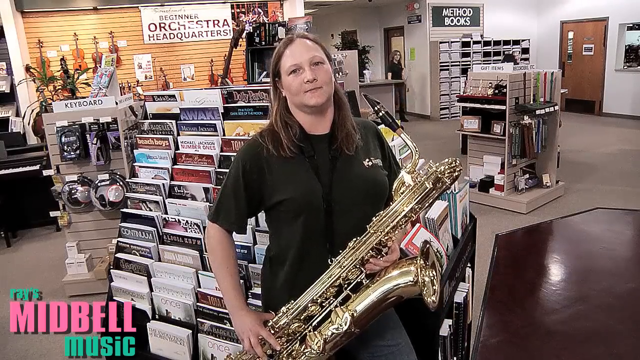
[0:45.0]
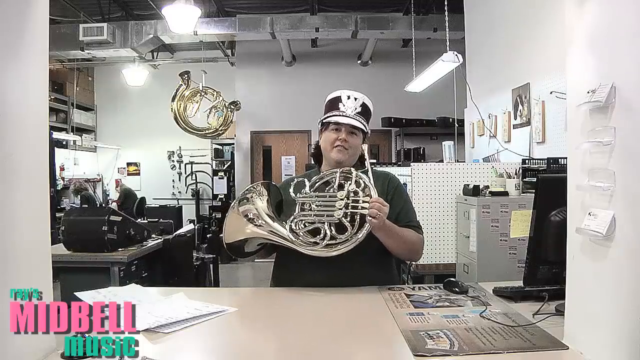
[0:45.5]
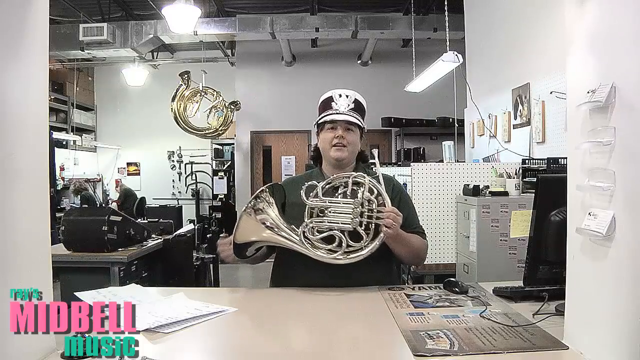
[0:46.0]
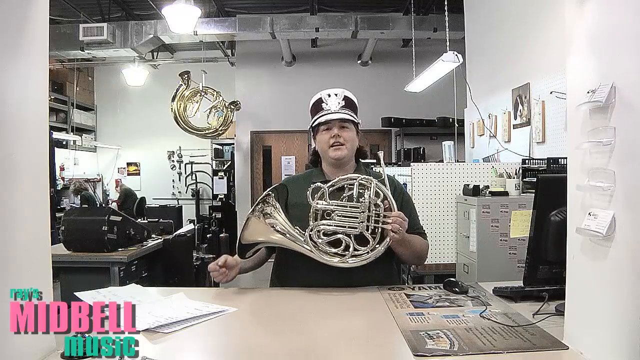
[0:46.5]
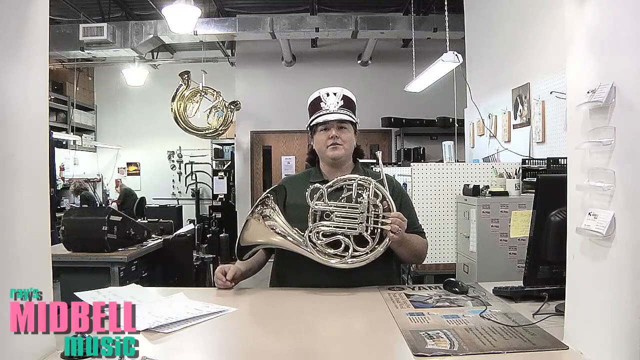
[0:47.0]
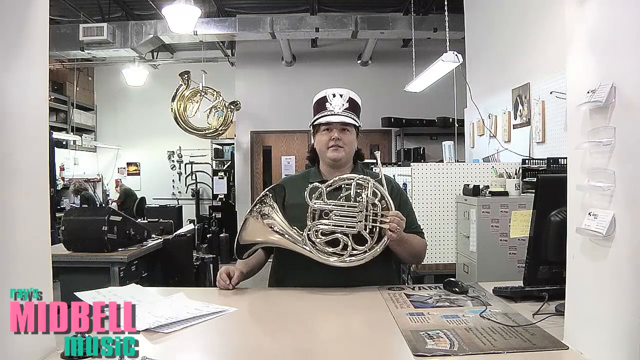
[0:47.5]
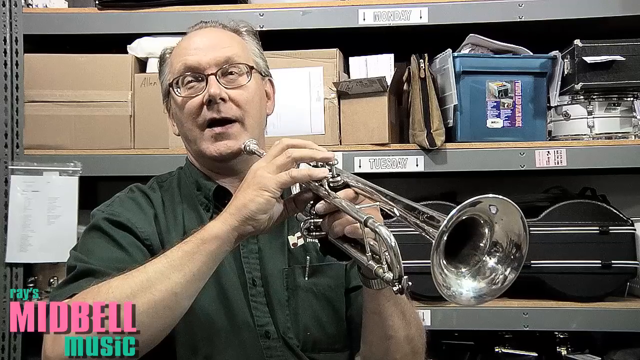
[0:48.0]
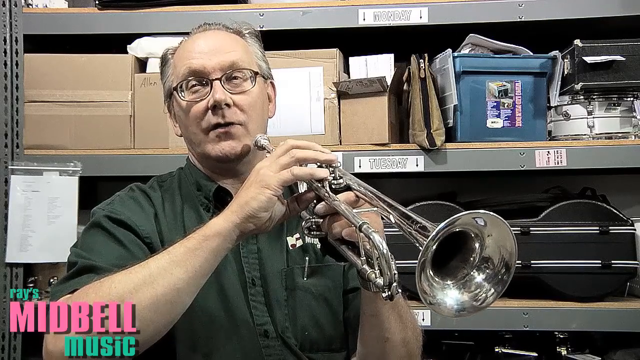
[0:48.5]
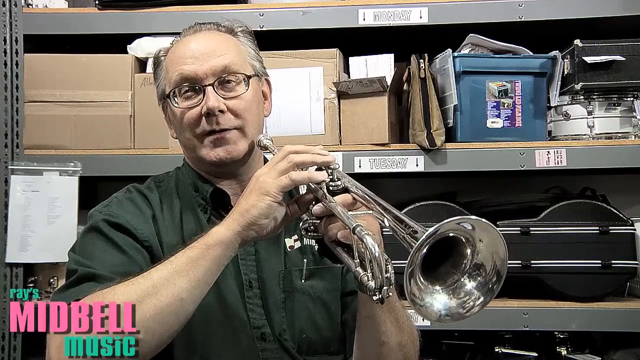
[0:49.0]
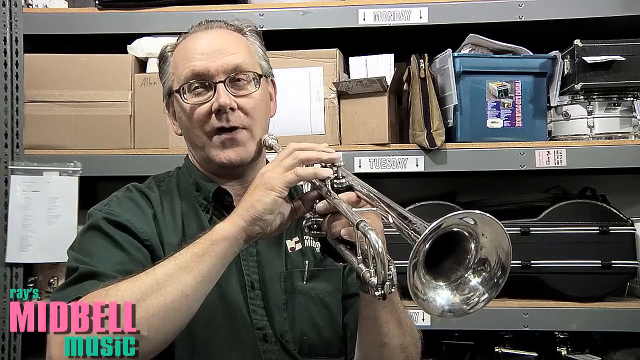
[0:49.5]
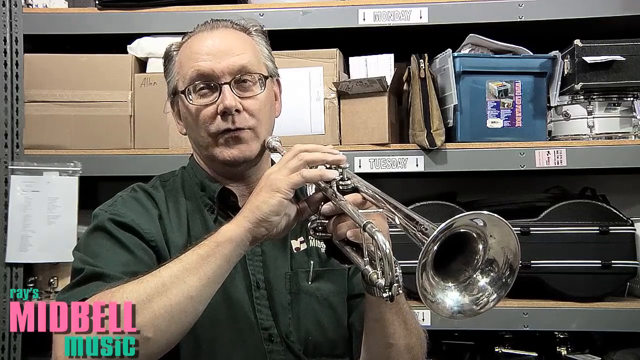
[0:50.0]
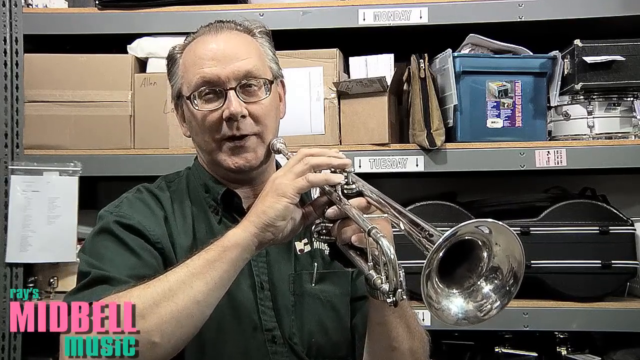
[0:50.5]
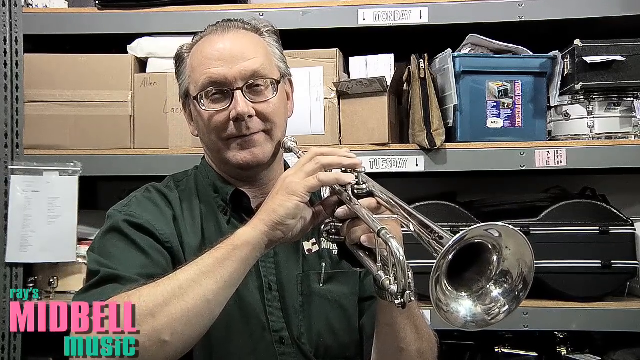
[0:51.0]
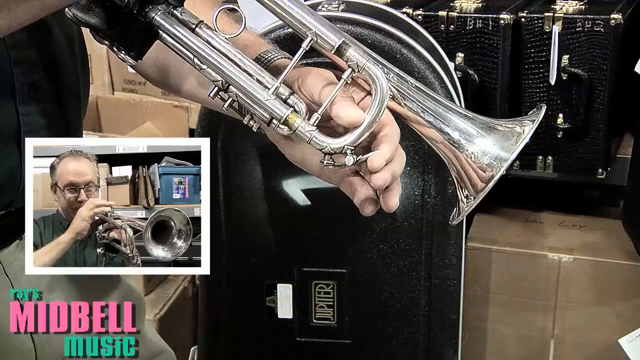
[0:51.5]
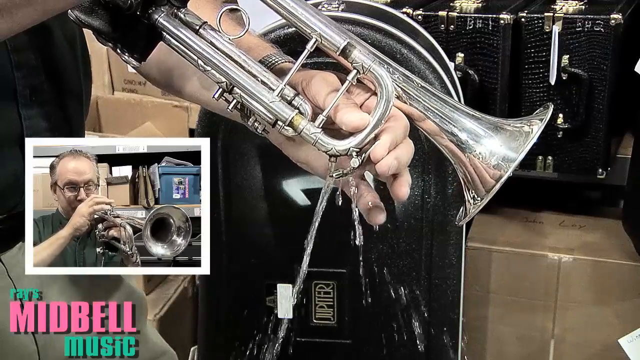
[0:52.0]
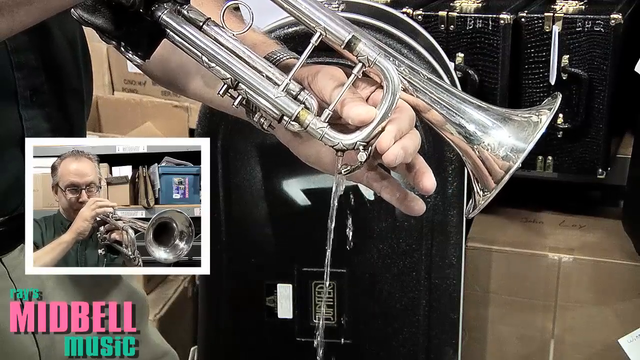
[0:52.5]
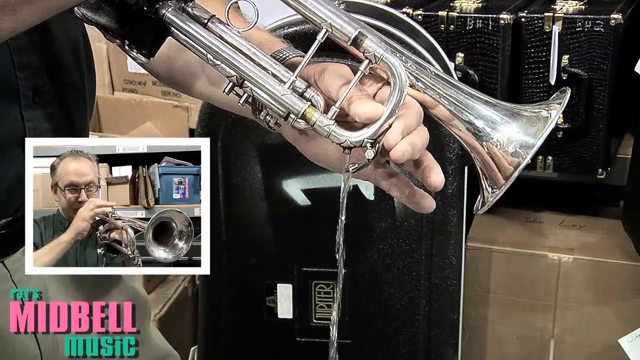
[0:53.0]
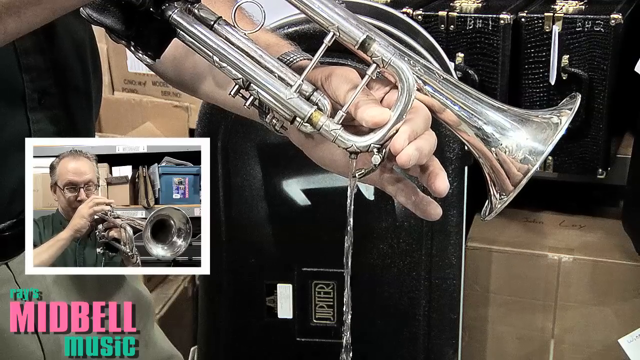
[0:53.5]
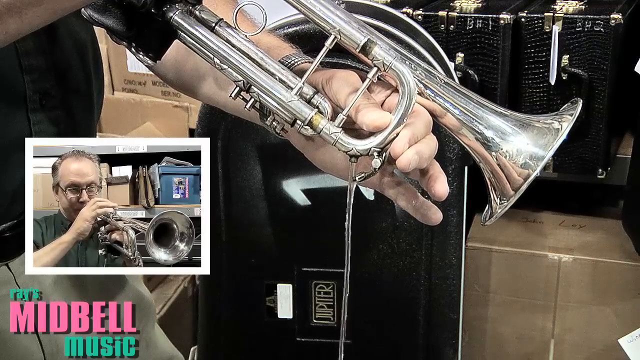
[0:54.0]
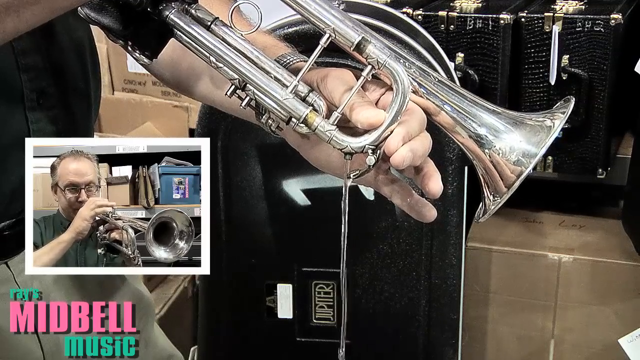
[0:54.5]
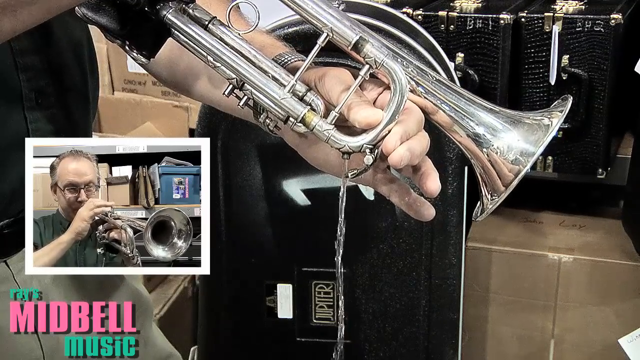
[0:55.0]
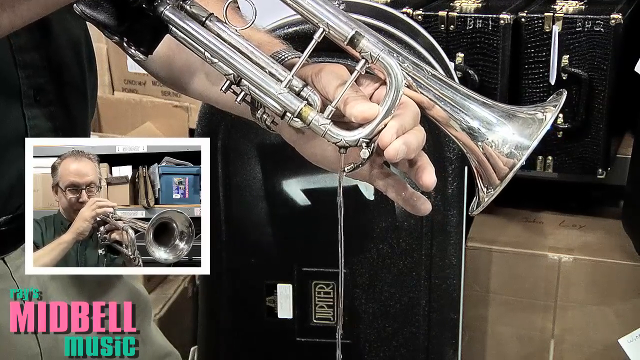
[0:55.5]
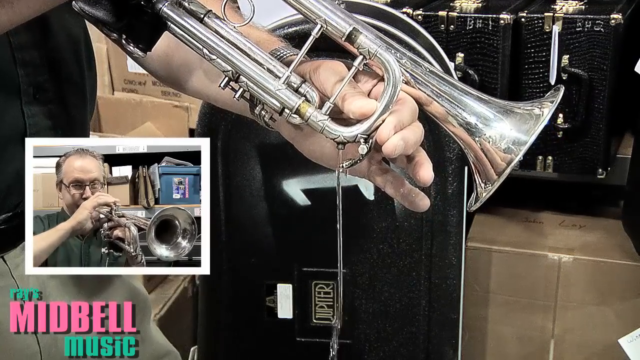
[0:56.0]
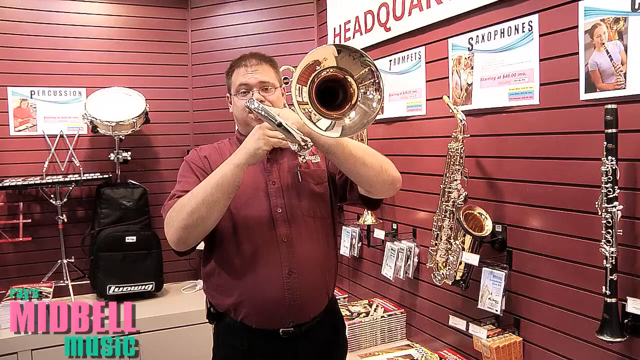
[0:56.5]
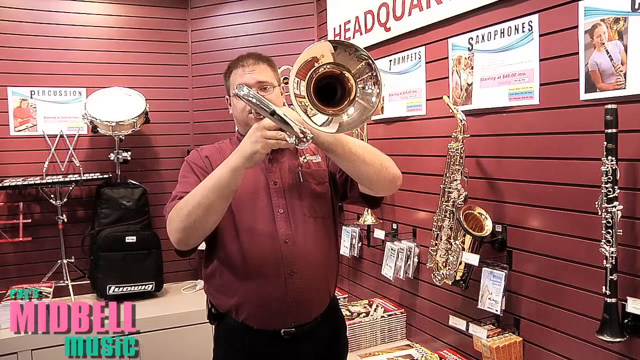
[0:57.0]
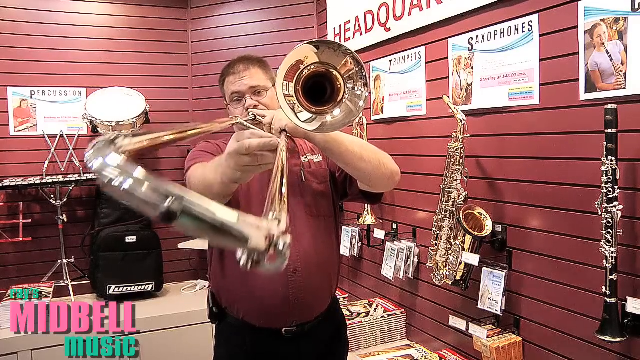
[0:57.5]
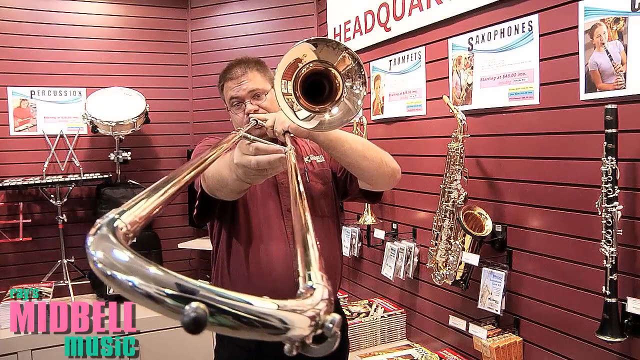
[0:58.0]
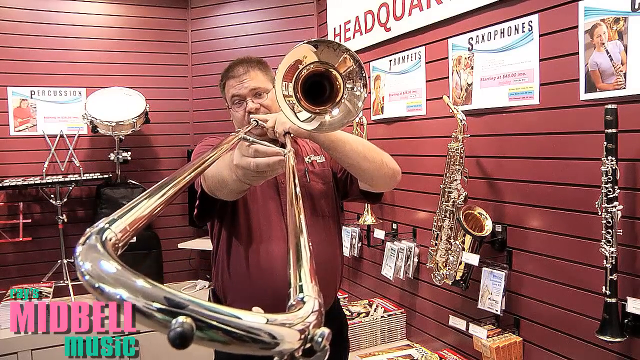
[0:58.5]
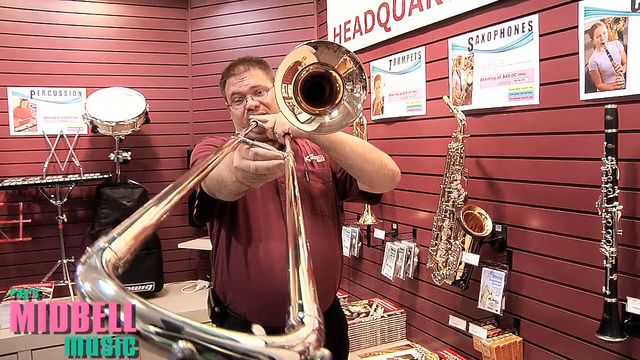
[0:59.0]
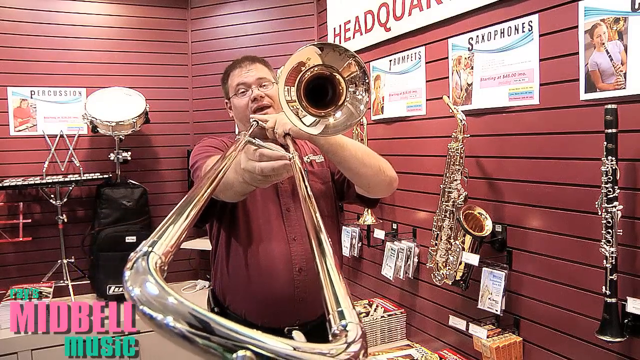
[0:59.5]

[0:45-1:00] About three separate scenes appear. First, a woman behind a desk holds a French horn in a very short shot and appears to say something. Next, a man holding a trumpet seems to give a demonstration, possibly of how to clean it or how to drain the spit out of it, talking as he does. The scene cuts to a close-up of the front end of the trumpet, where he releases a valve and water pours out. The sequence ends with a man holding a trombone facing the camera; he extends the slide out towards the camera, possibly while playing or explaining how it works. Everything appears to be within the same Midbell store, in different locations, with about three people, each facing the camera directly in a one-on-one interview style and either demonstrating or talking.